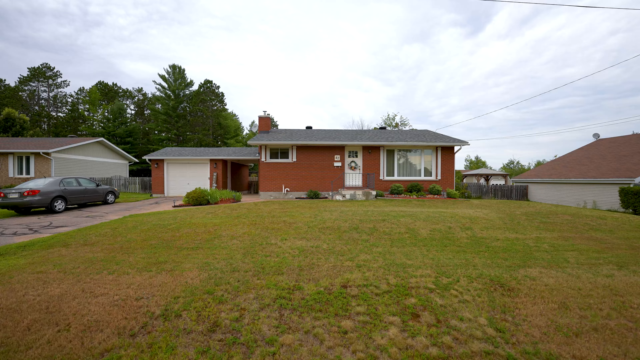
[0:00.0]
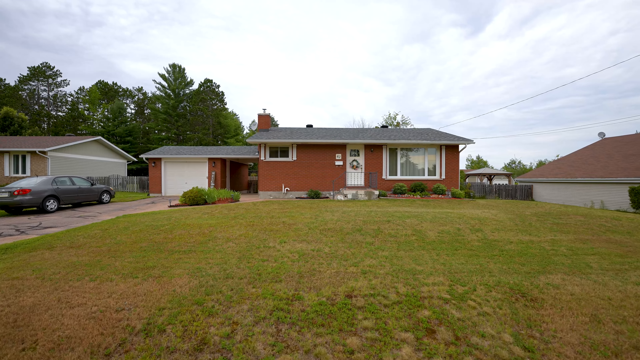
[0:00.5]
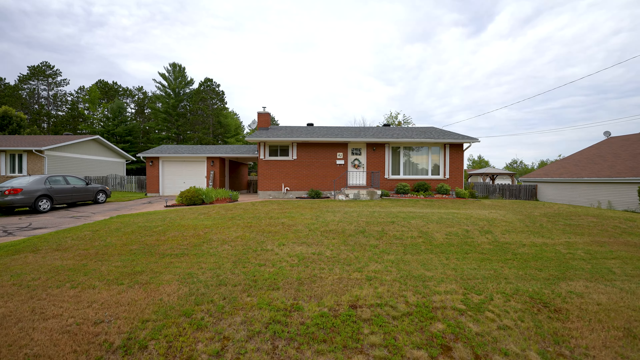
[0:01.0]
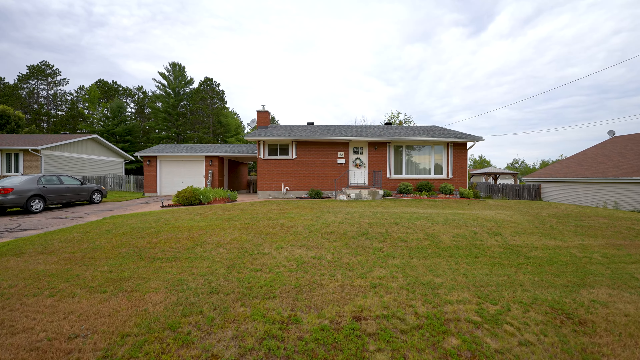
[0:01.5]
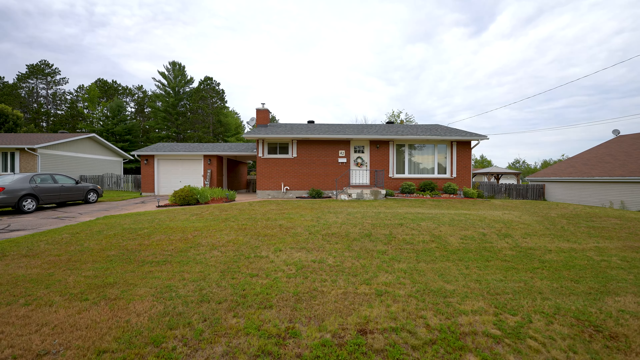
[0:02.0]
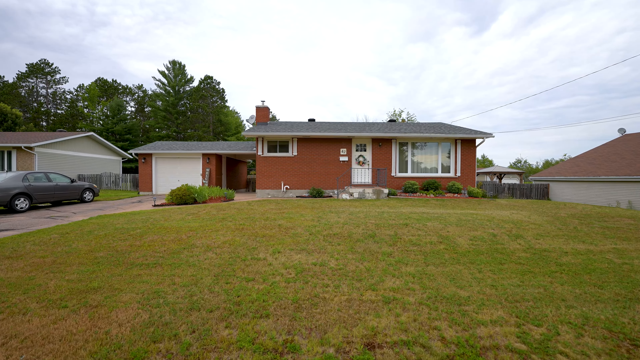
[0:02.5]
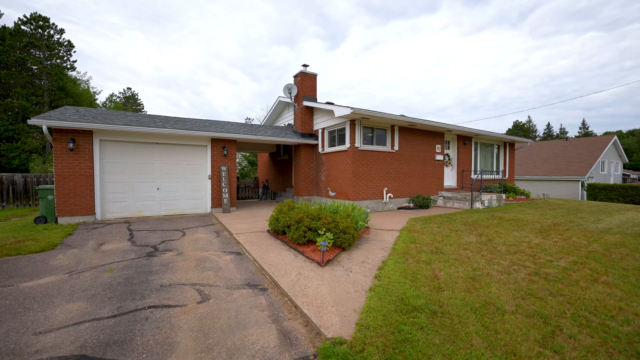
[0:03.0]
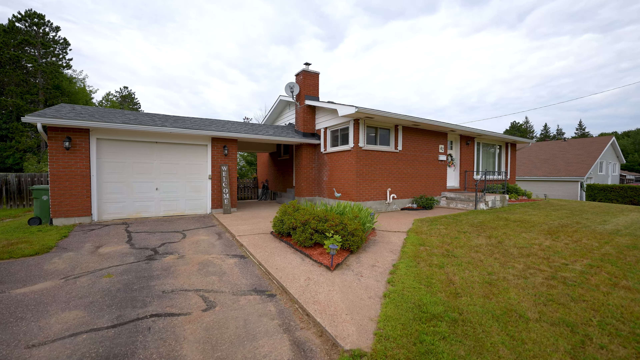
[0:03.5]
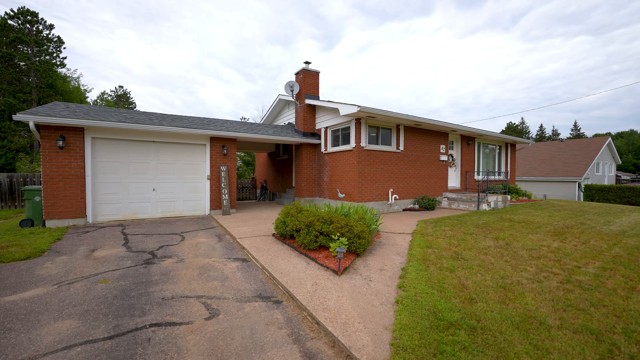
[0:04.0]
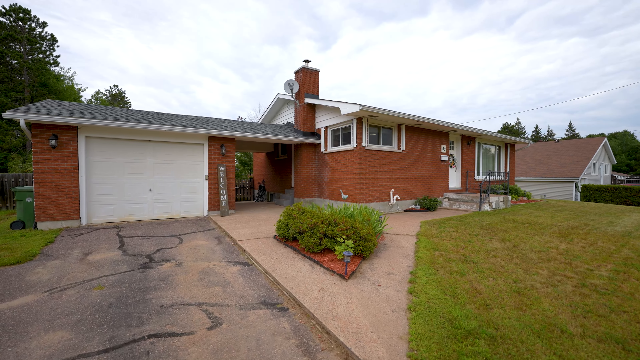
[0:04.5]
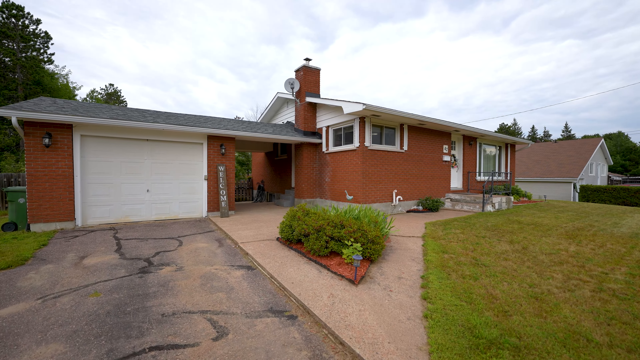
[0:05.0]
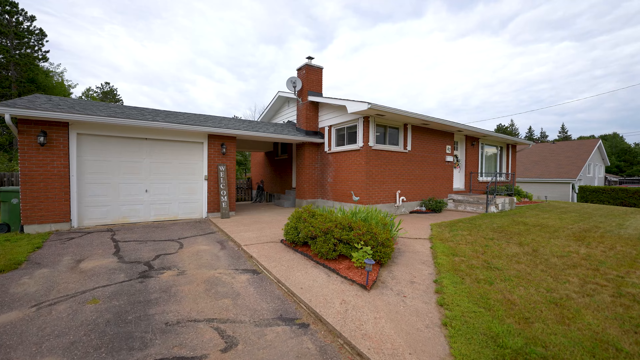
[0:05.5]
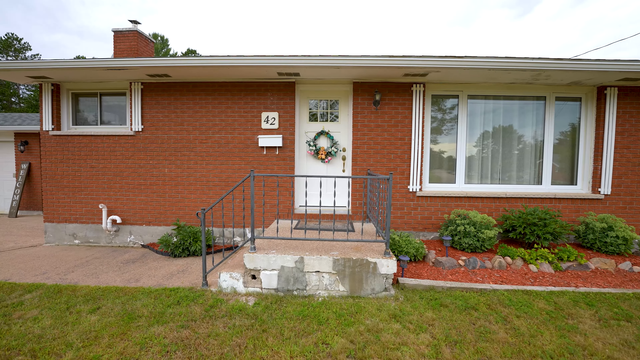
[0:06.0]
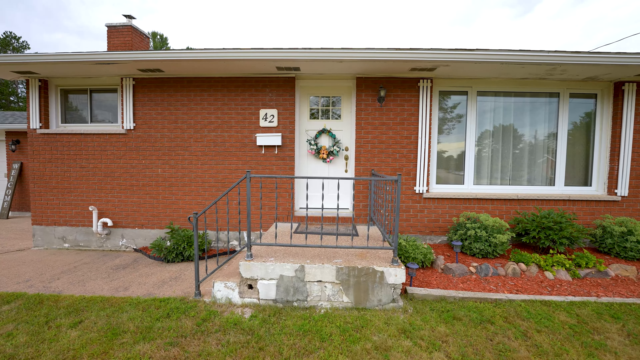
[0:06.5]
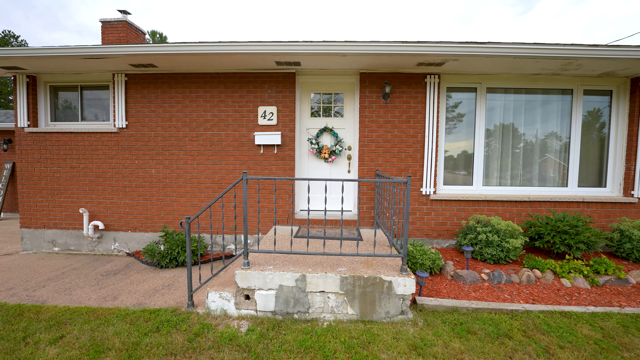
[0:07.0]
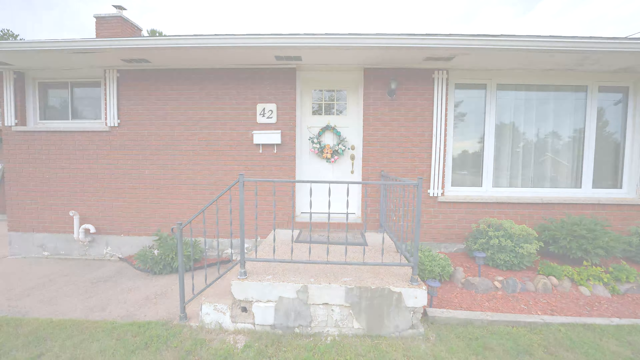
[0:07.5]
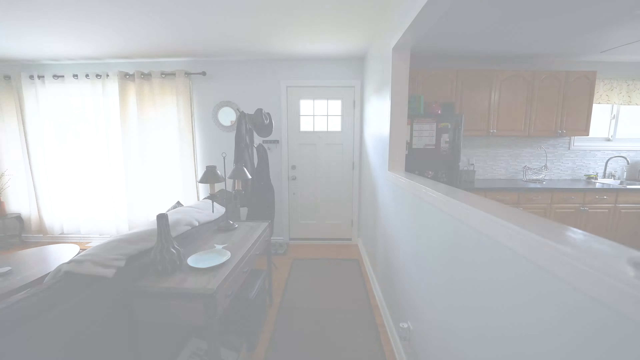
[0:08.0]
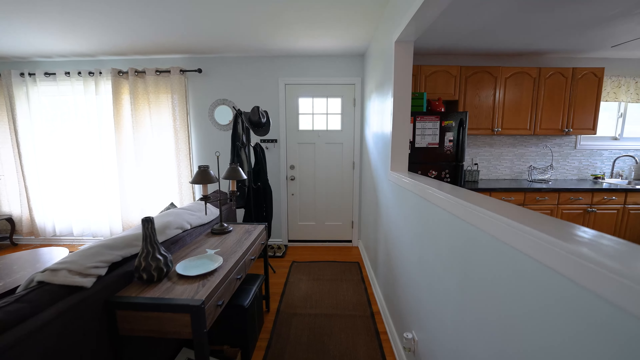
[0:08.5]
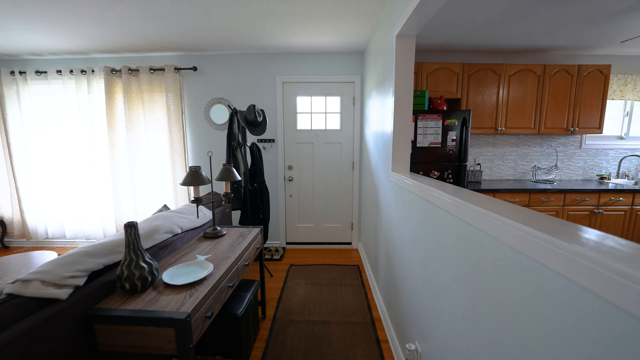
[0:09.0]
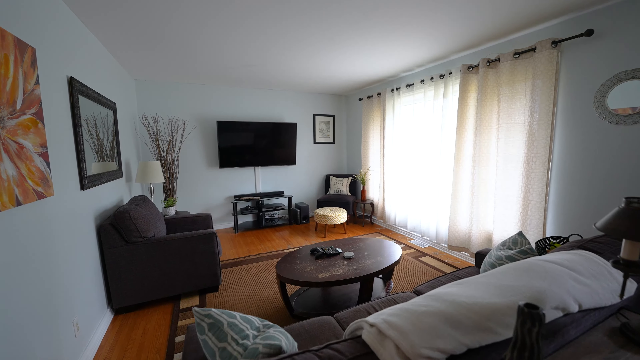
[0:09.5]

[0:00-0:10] The video opens on the front lawn of a modest red brick home with a garage door and a shingle roof. The yard is fairly manicured, with bushes in the front. Moving inside, the living room is fairly wide open and a nice size, and a kitchen is to the left on entering.